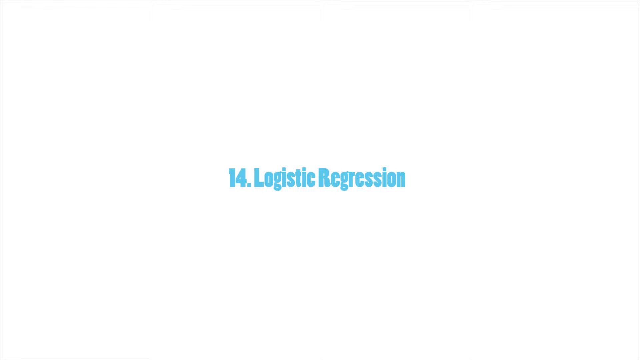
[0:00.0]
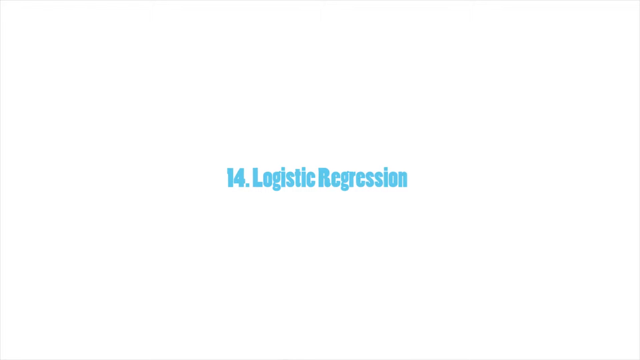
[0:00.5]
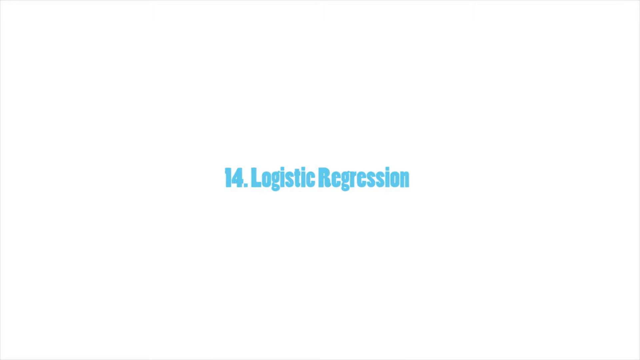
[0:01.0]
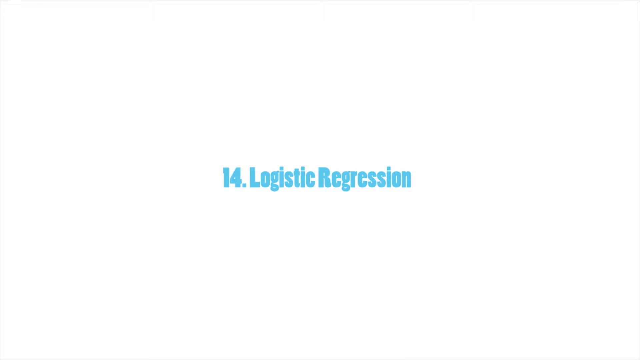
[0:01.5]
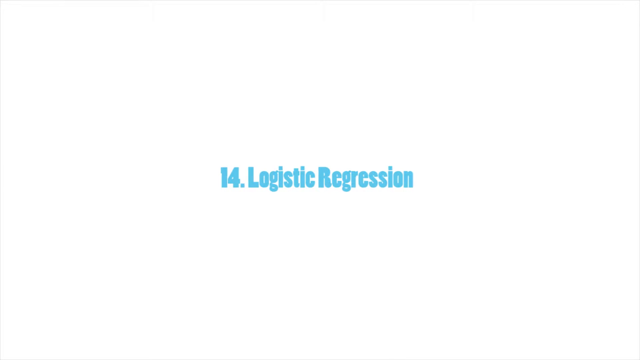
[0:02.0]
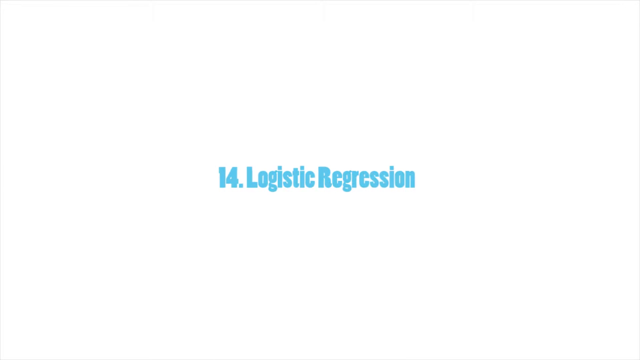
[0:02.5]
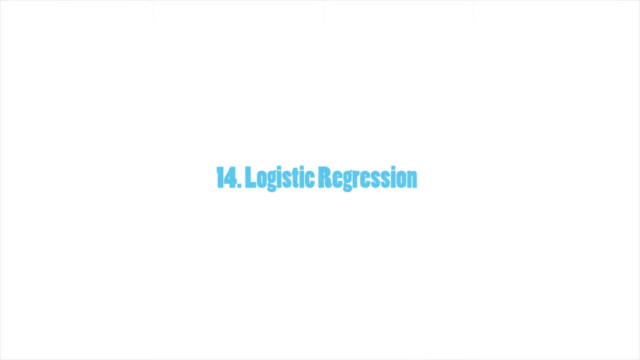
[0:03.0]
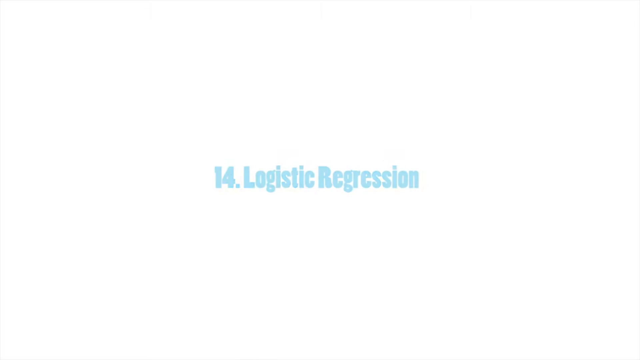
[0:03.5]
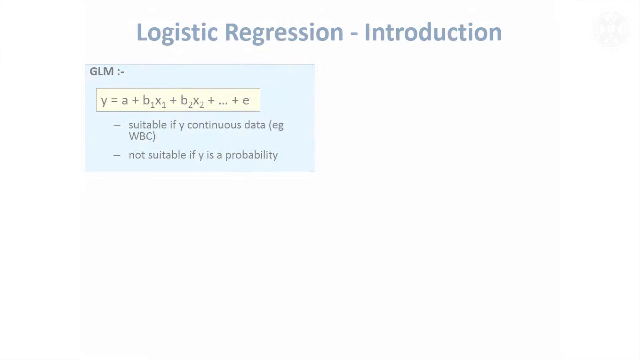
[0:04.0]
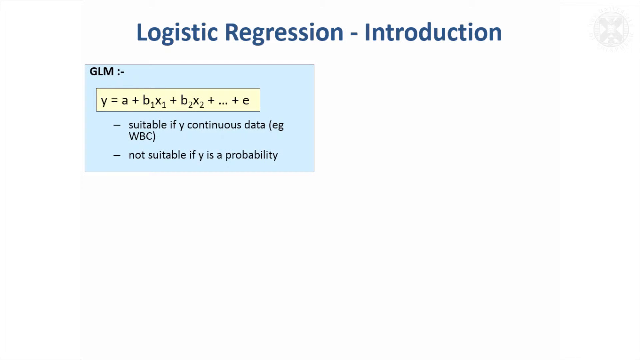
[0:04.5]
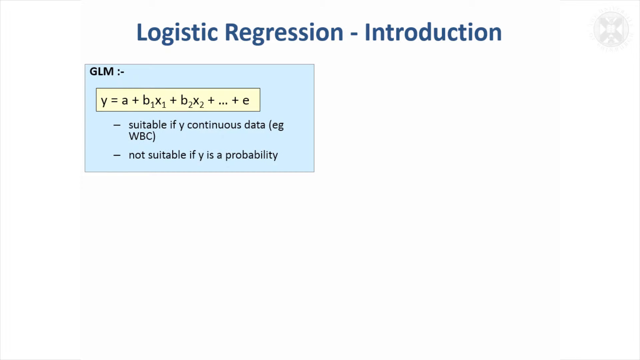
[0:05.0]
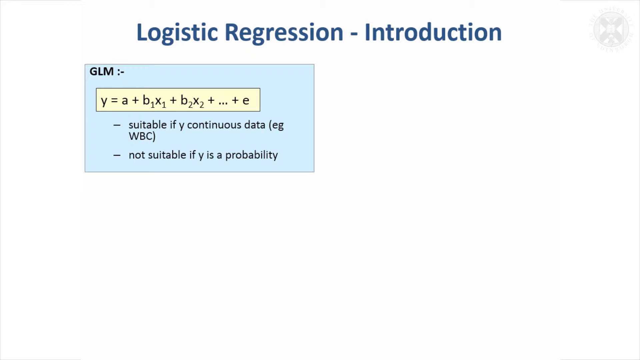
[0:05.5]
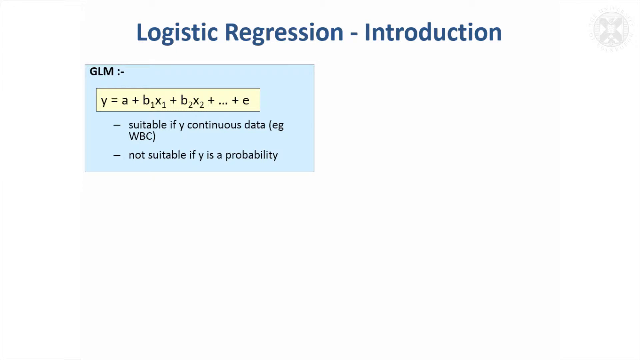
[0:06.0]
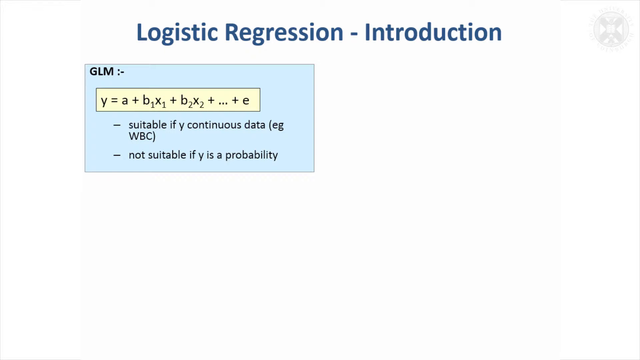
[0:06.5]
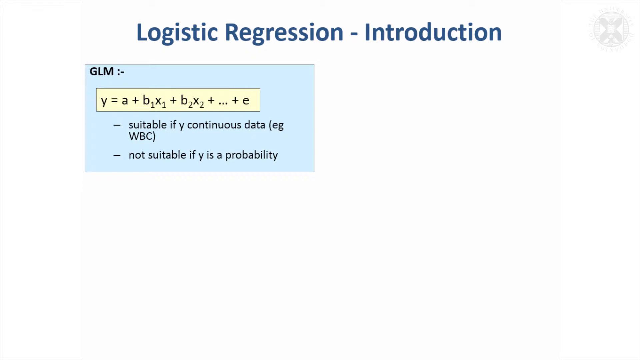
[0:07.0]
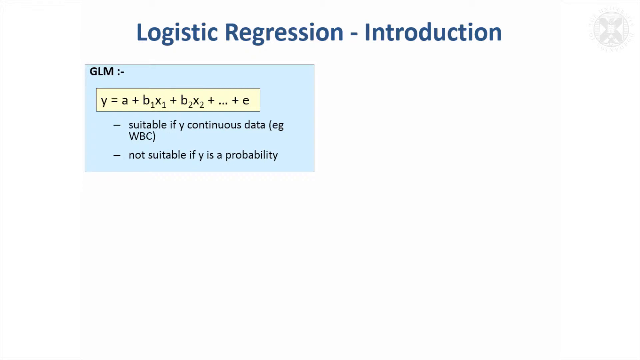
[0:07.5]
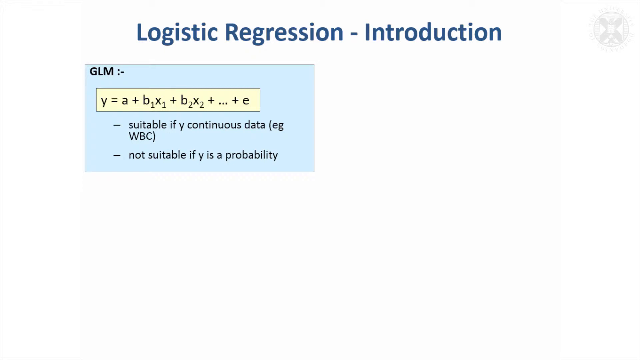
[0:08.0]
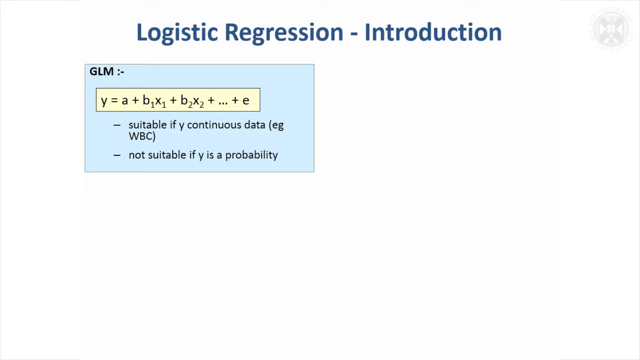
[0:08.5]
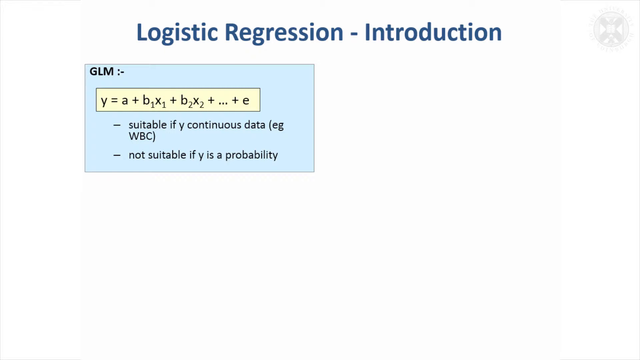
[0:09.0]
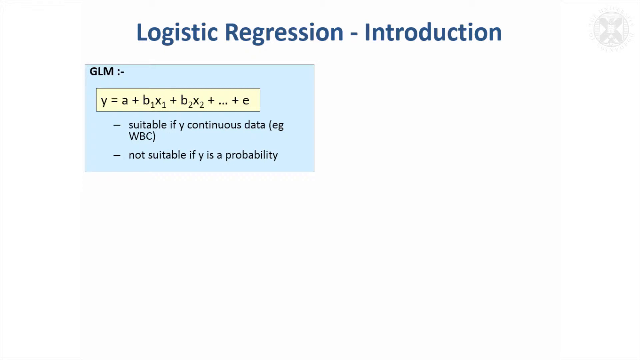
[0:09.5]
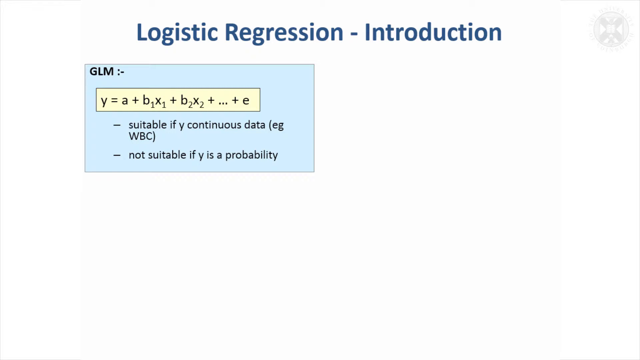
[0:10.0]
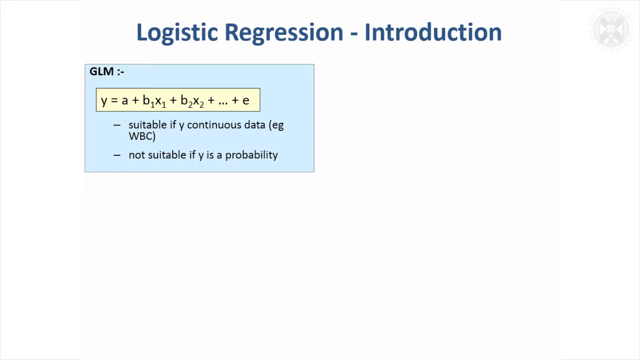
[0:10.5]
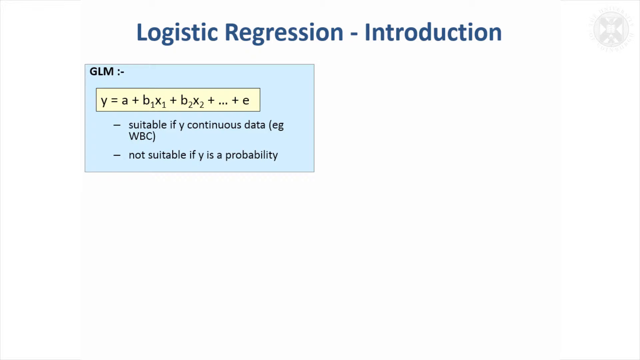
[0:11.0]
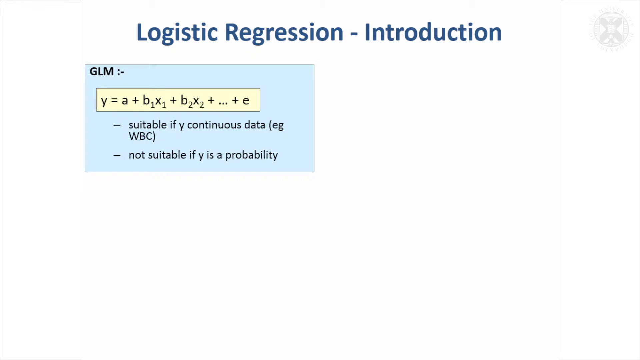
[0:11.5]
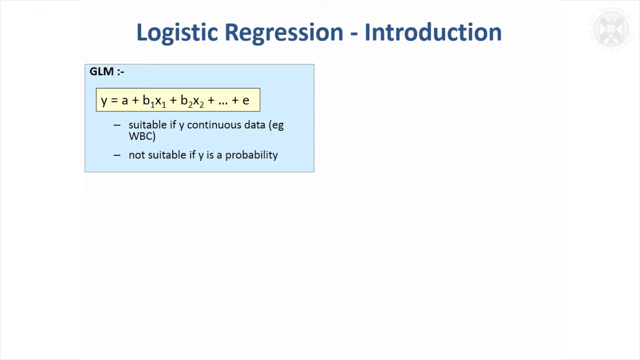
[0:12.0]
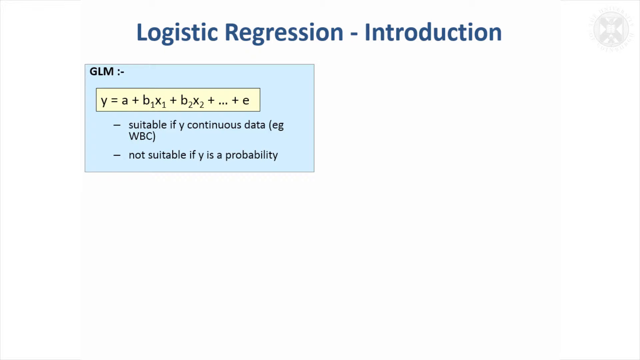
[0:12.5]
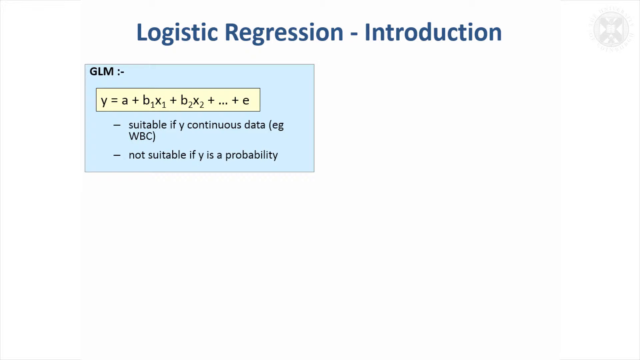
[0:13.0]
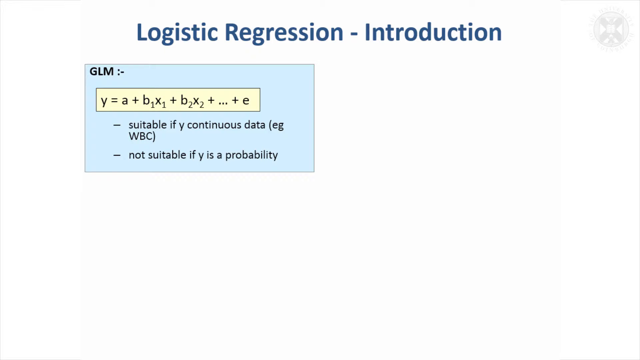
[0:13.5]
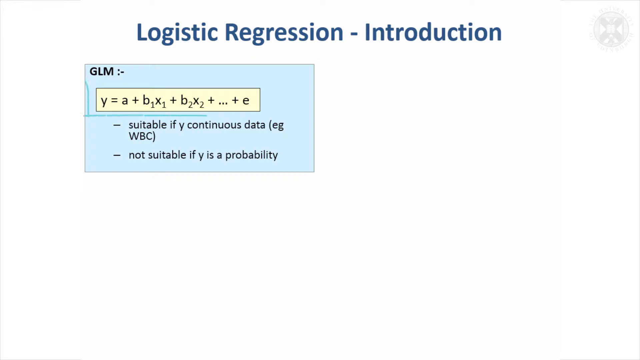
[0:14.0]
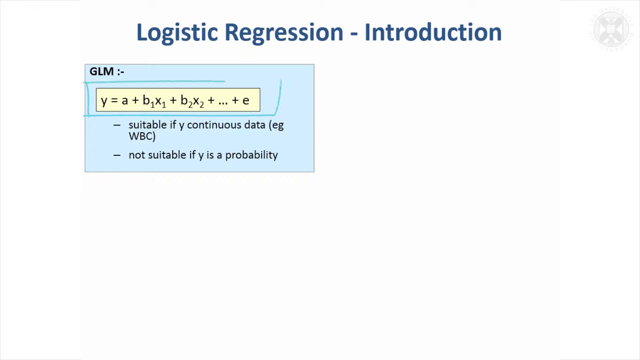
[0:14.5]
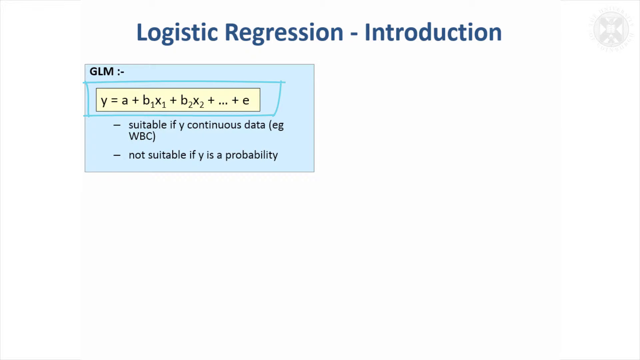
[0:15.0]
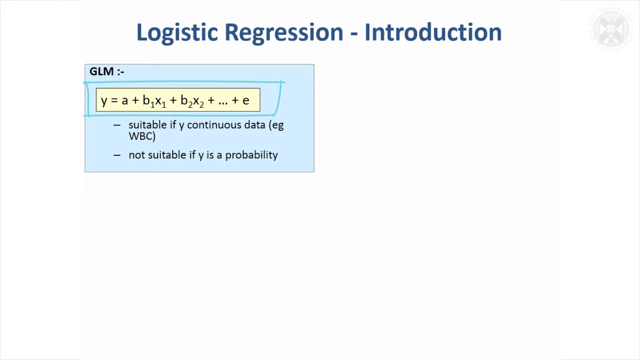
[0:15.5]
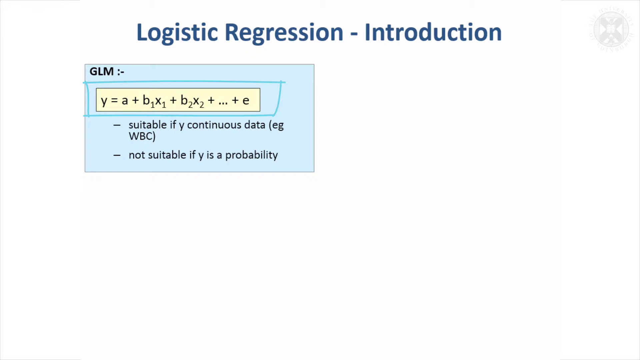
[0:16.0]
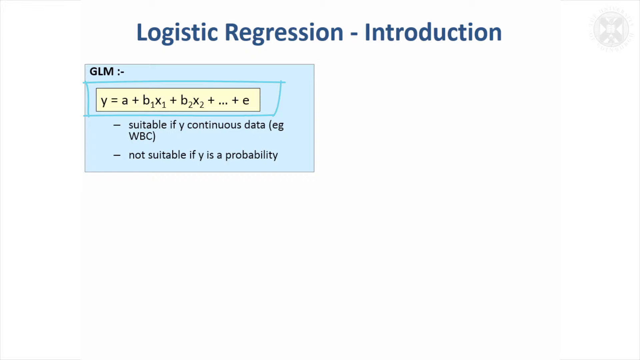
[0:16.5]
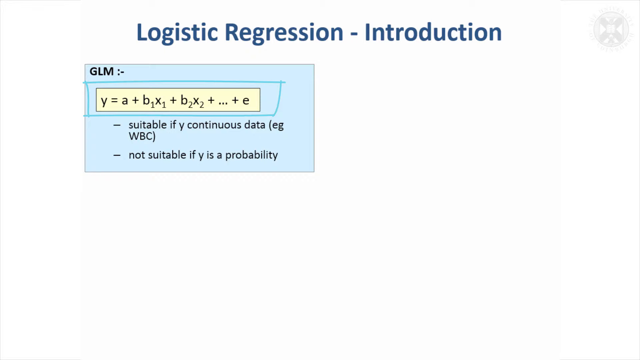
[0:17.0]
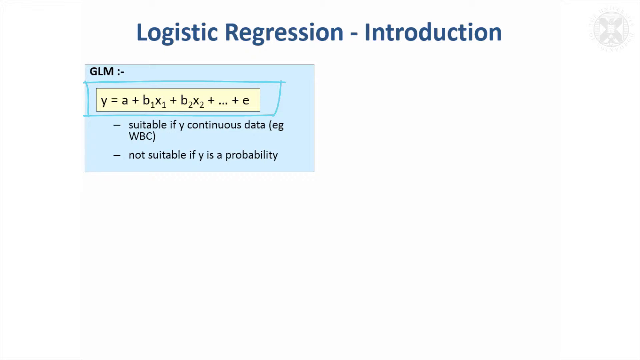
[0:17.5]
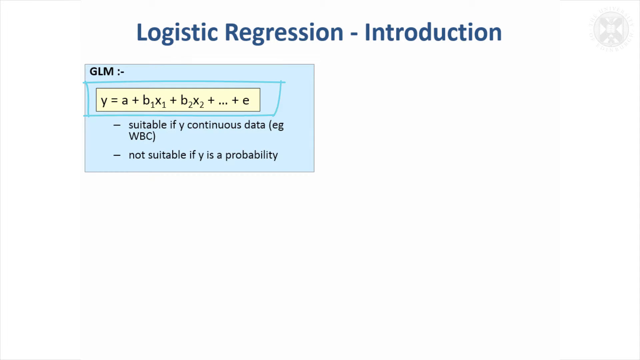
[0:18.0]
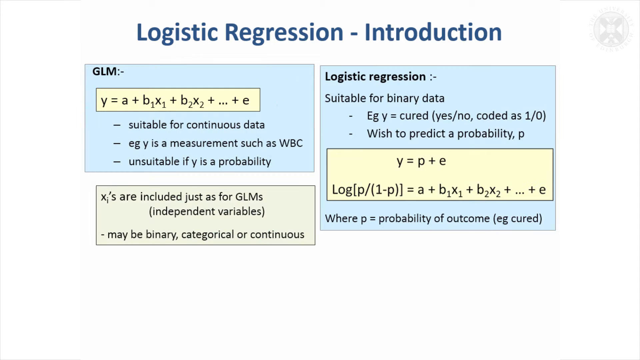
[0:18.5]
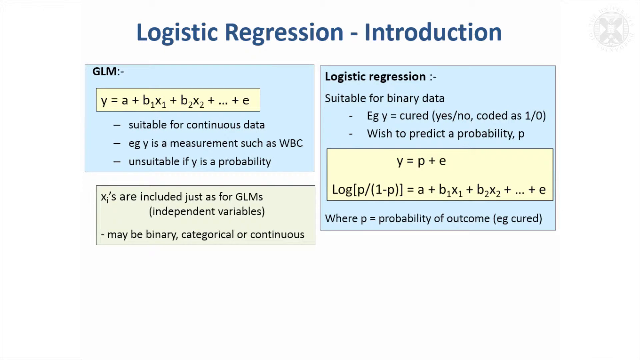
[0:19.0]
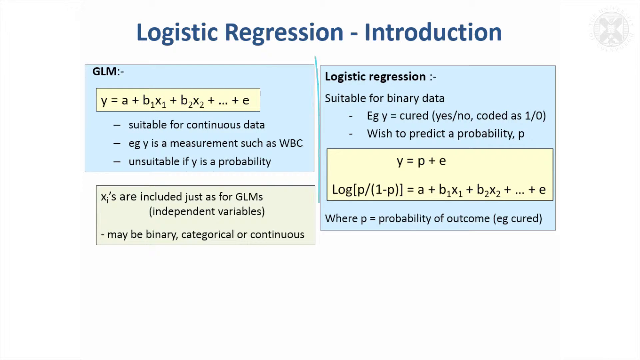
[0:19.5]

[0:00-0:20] A mathematics screen shows a problem, and the title "Logistic Regression" for Chapter 14 appears on the screen. A user navigates the material, which covers the introduction to logistic regression. A solution appears in a smaller table labeled GLM, containing the equation Y = a + b1x1 + b2x2 + ... + e. A dash point below the equation reads "suitable if Y continuous data e.g. WBC", and another point reads "not suitable if Y is probability". The user draws on the equation with the cursor. Another table appears just to the right of the first one, labeled "Logistic Regression", reading "suitable for binary data e.g. Y is equal to 1 or 0, coded as 1 or 0".